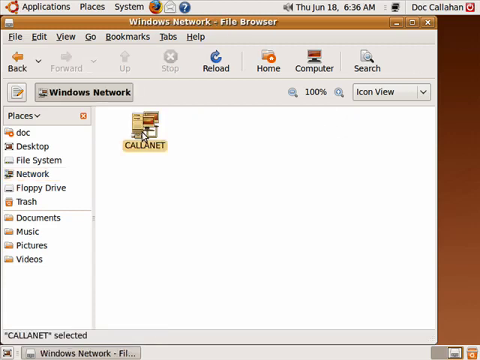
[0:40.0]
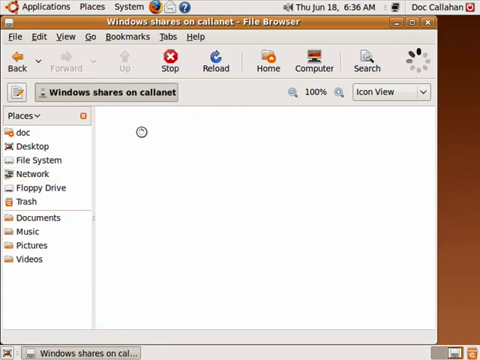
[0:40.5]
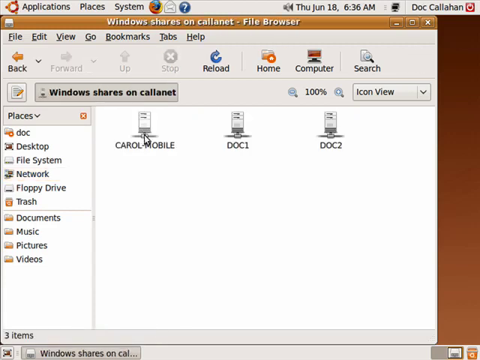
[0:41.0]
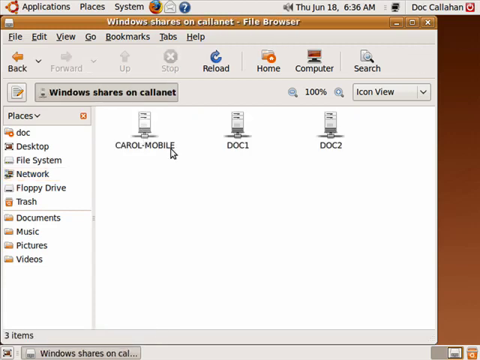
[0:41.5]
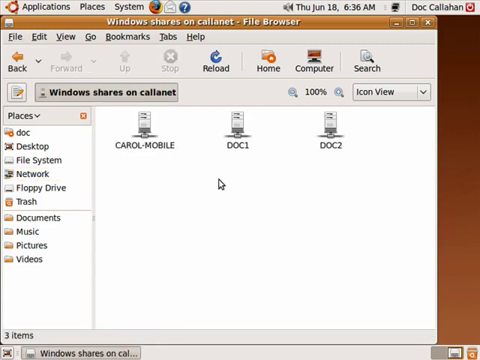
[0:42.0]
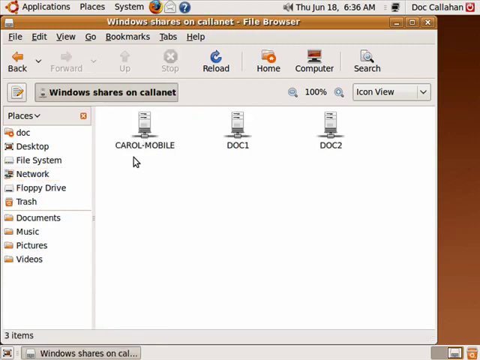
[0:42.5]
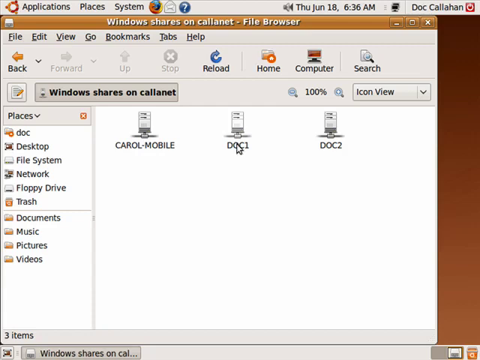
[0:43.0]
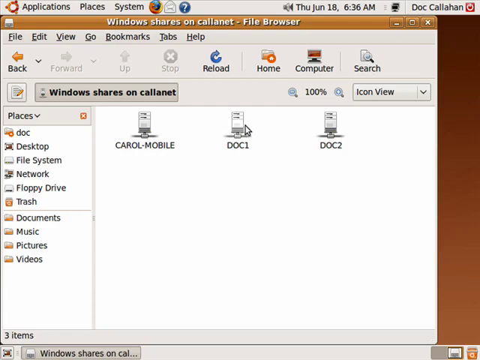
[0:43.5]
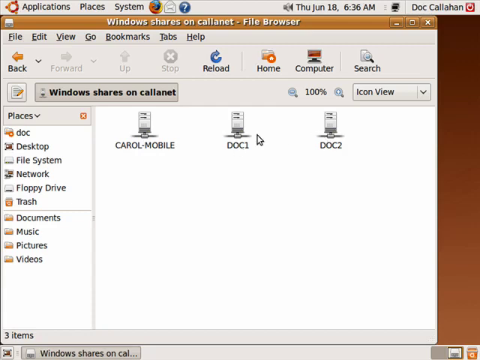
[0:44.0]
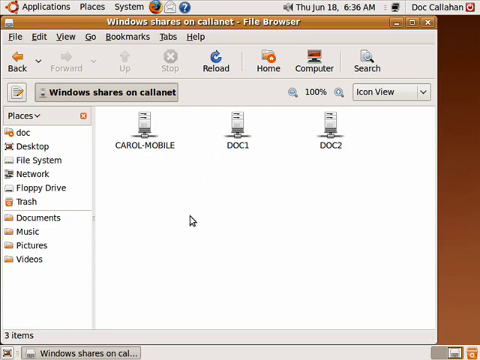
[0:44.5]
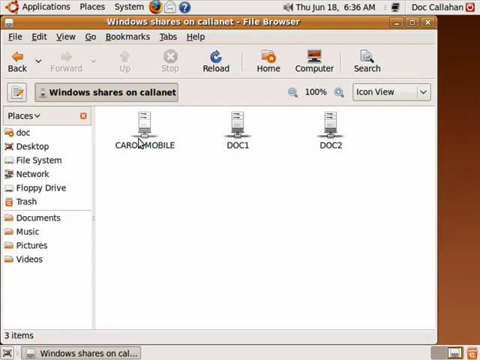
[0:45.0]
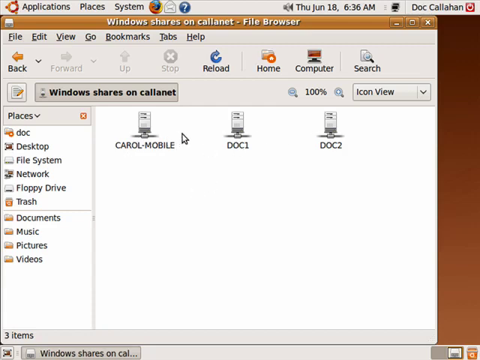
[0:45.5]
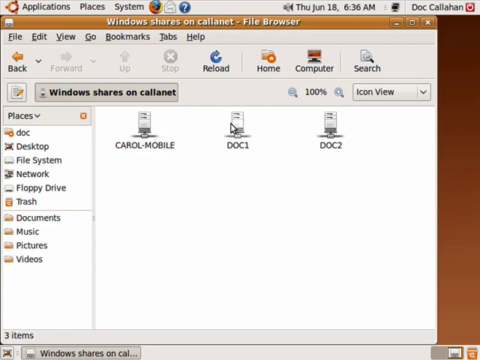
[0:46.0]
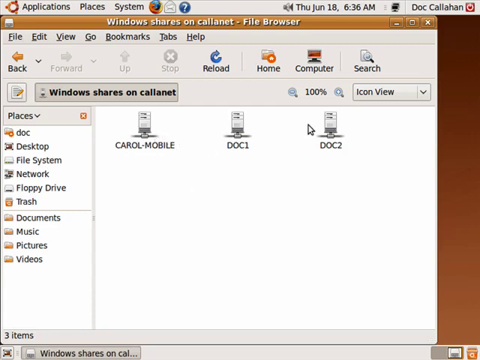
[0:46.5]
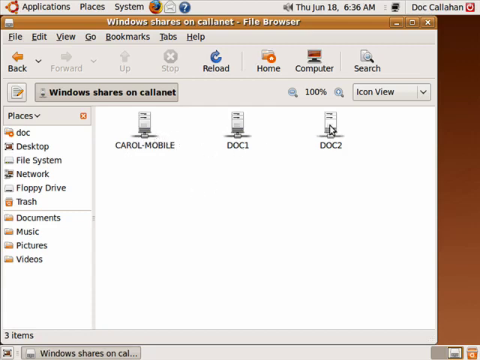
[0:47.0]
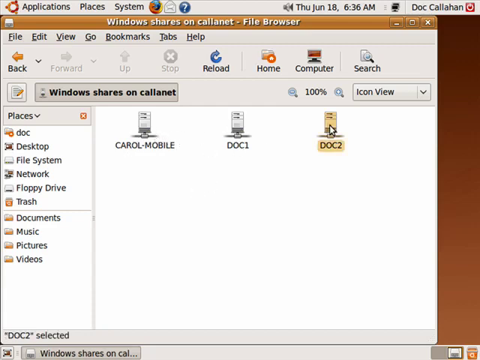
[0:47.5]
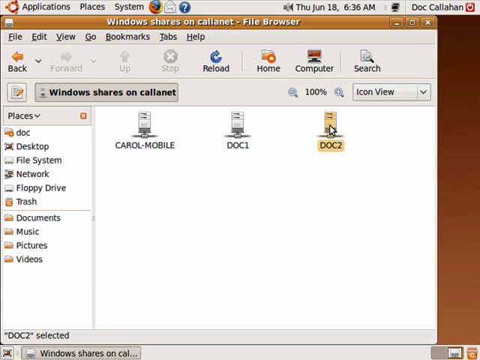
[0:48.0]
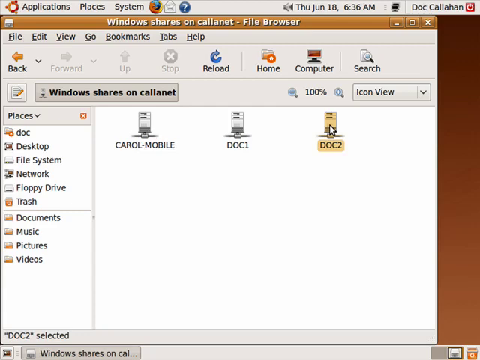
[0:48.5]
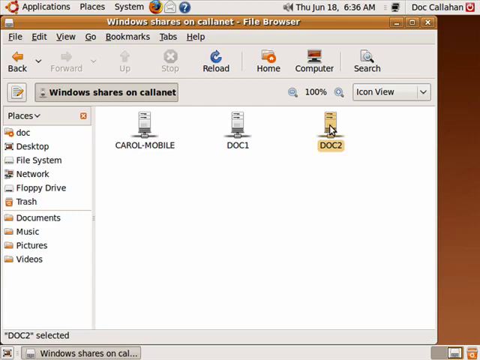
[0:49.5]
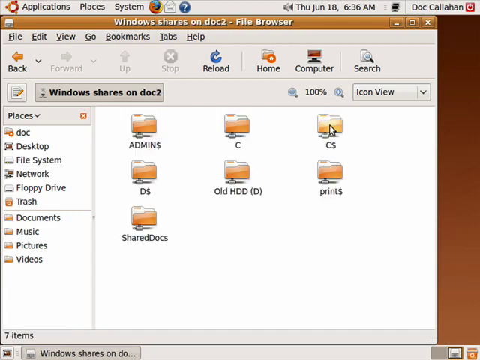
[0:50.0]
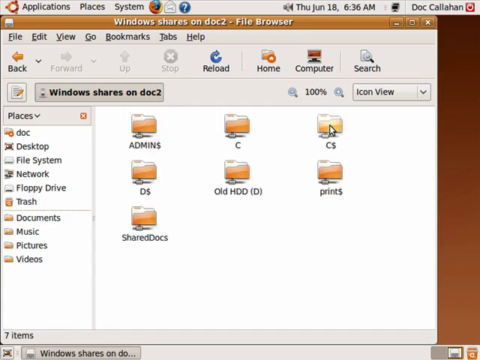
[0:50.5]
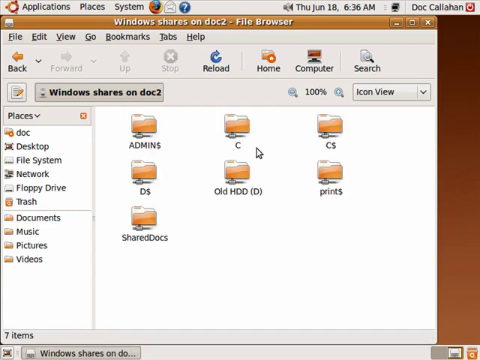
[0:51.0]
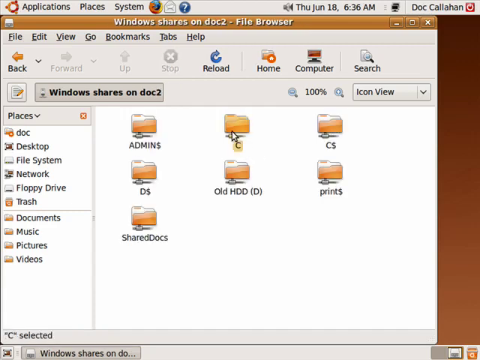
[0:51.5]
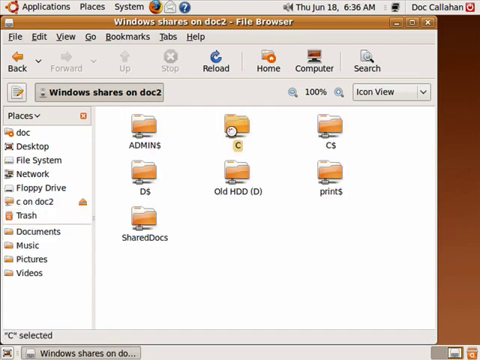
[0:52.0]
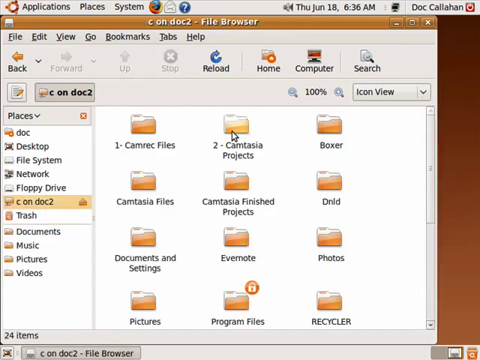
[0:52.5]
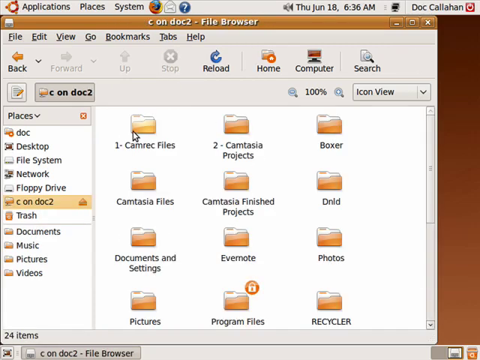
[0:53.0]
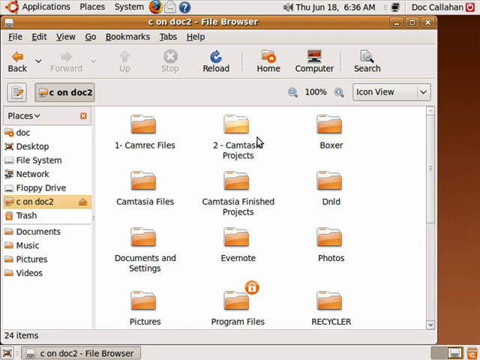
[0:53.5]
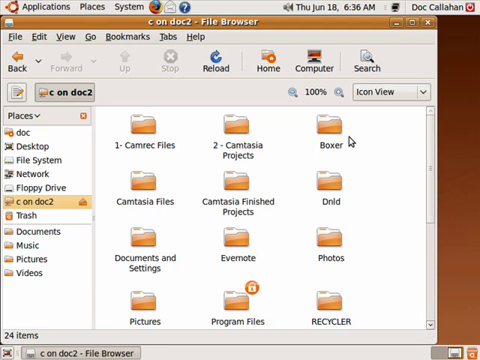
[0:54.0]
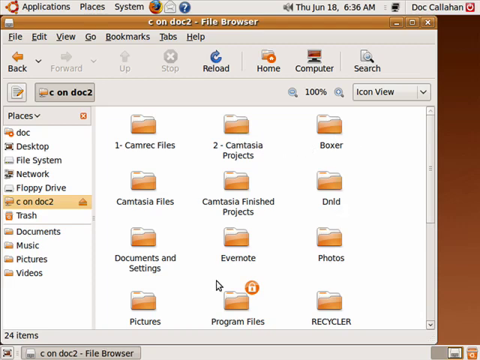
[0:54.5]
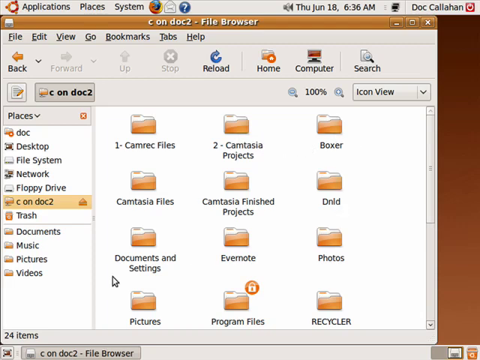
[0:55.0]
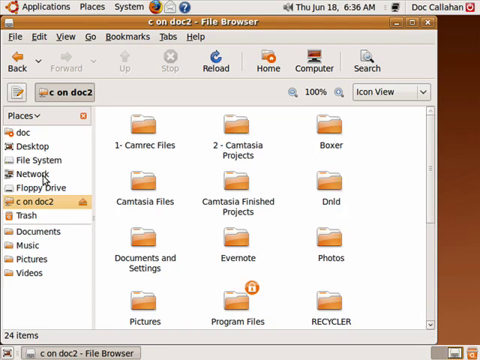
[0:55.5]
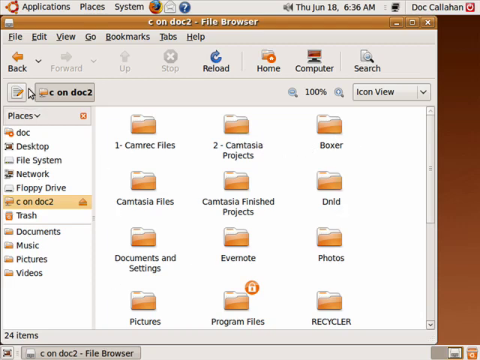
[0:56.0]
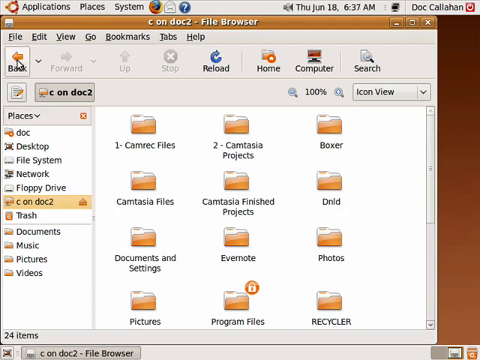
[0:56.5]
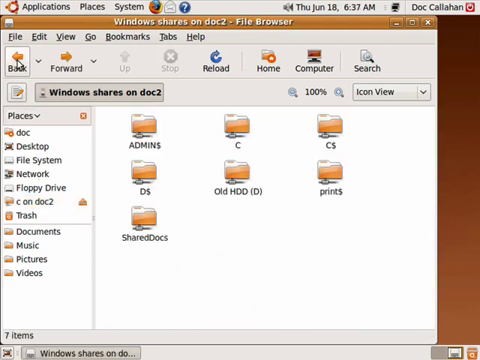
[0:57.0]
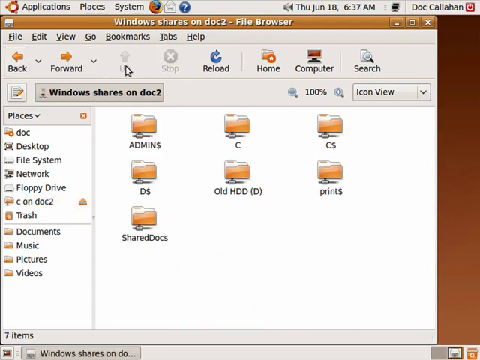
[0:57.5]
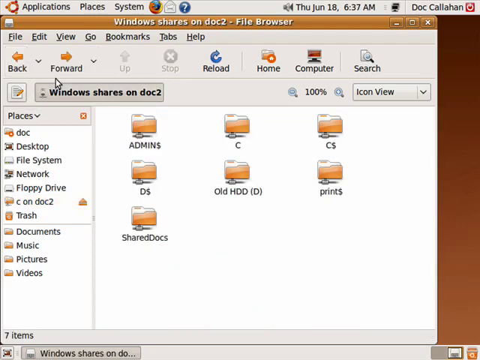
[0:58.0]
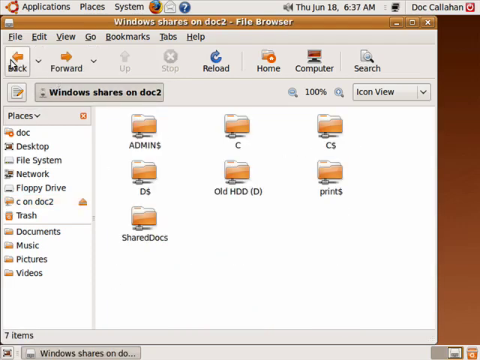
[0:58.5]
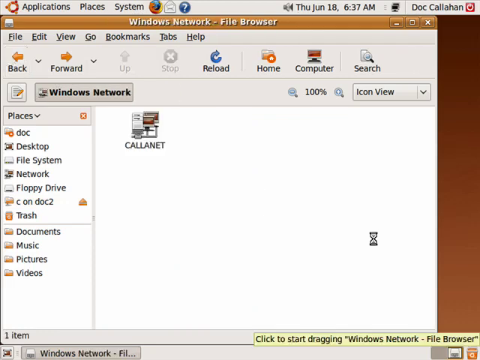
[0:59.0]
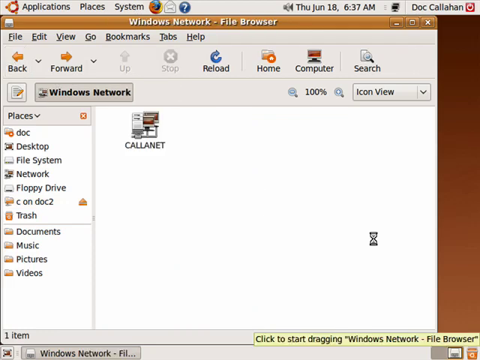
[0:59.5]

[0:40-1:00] In the file sharing section, three separate folders appear on the screen, giving access to three different machines. The three machines are within the same domain and network and are being accessed remotely by a person. The icons look a bit like those used in Windows. Information is shown that it is possible to access another person's computer remotely.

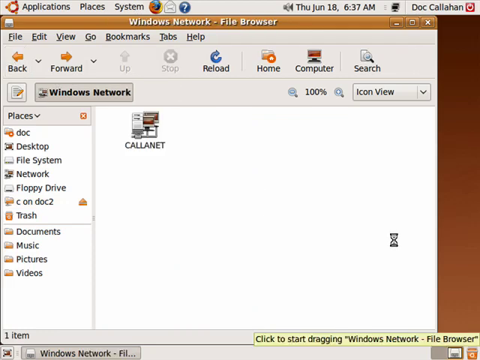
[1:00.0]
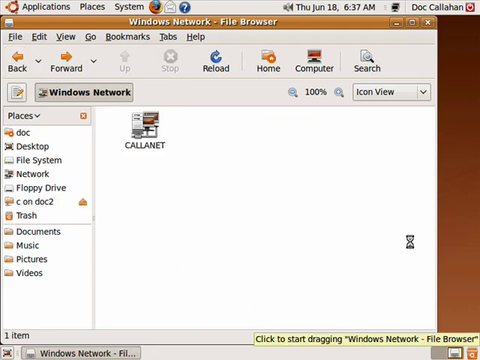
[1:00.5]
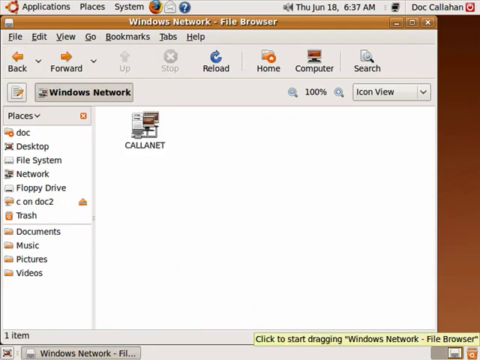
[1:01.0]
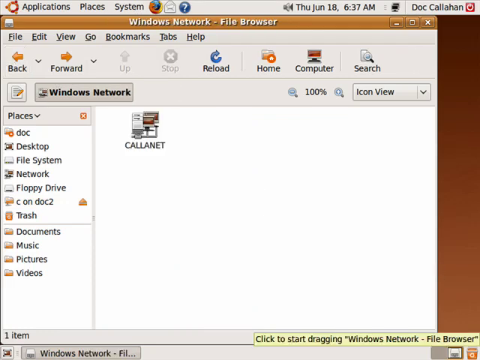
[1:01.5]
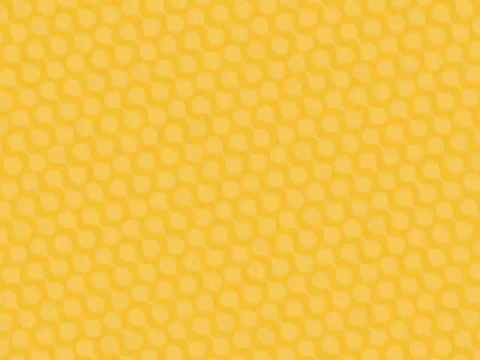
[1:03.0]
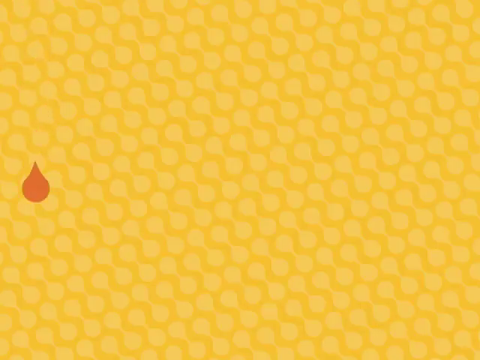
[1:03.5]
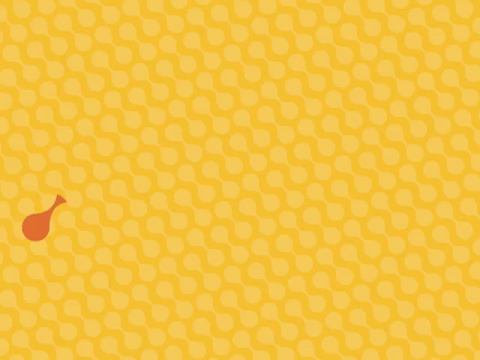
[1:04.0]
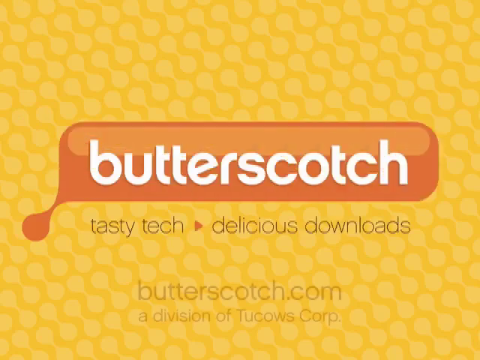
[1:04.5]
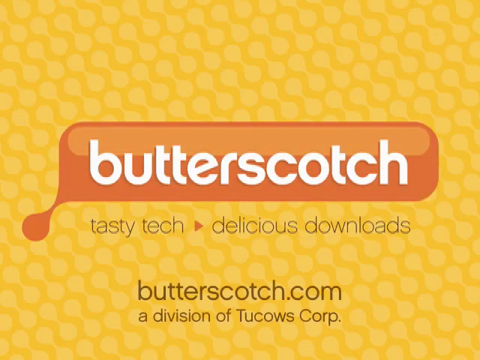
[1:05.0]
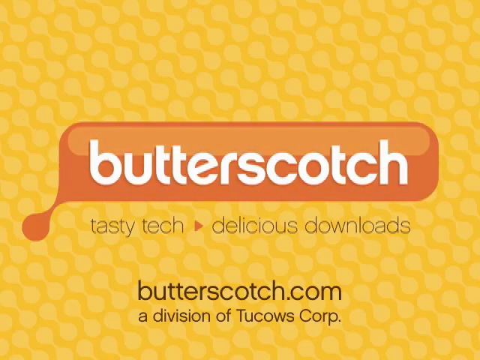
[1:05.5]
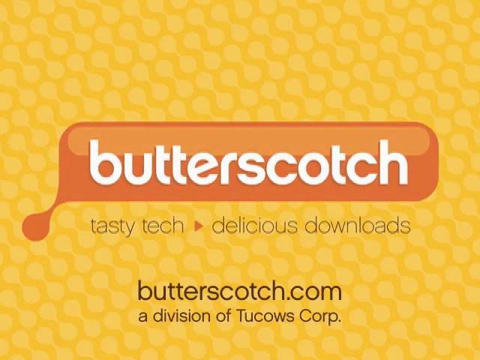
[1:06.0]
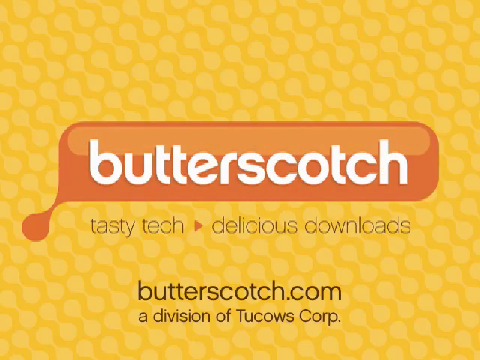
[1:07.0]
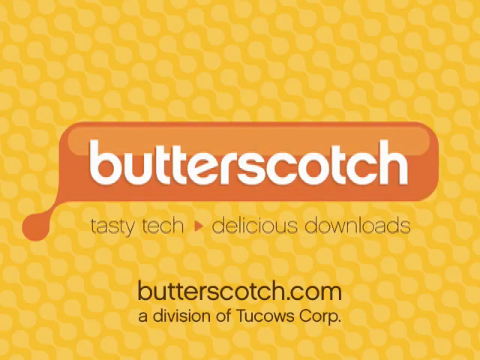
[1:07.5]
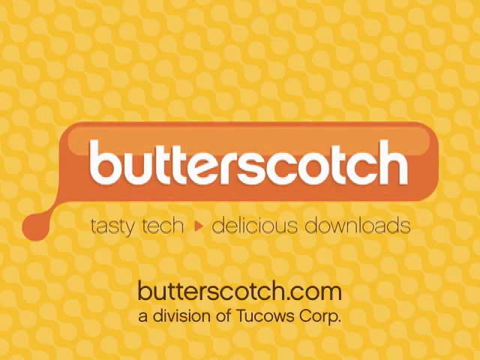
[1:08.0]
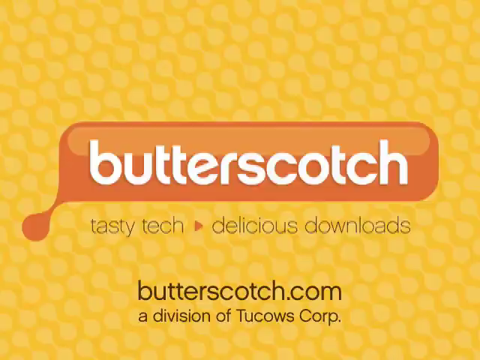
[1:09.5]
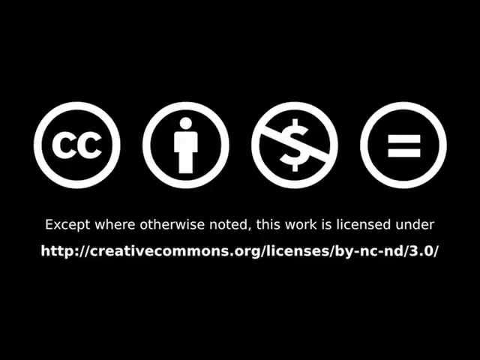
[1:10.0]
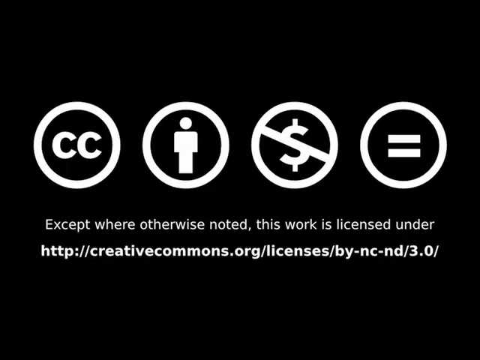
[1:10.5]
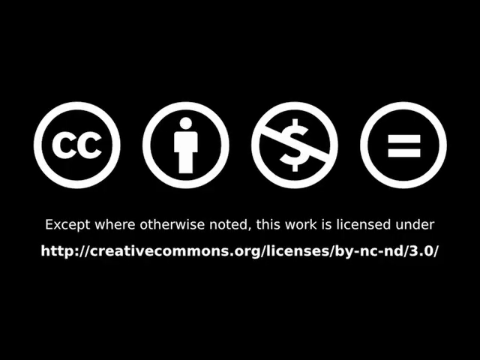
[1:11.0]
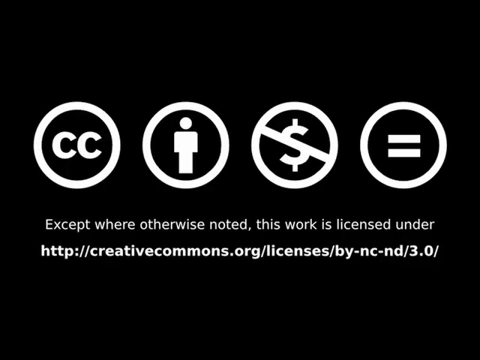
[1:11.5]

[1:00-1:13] The use of the computer continues, and then the Butterscotch advertising appears again, with a yellow wallpaper in the color of bees, beehives and honey. The advertising shows the text "Tastetec, delicious downloads".